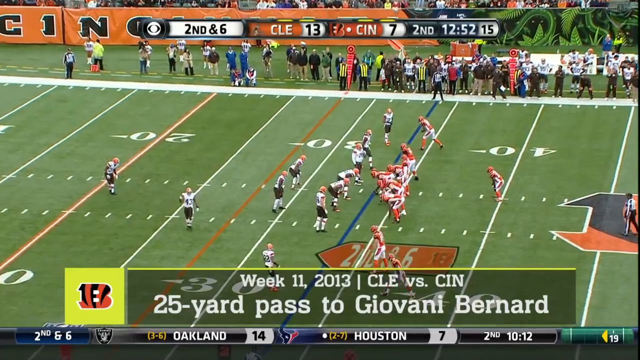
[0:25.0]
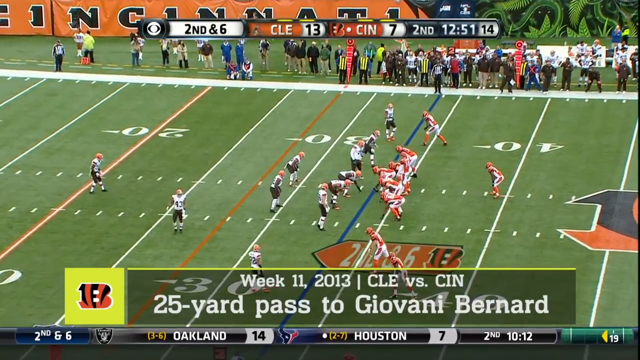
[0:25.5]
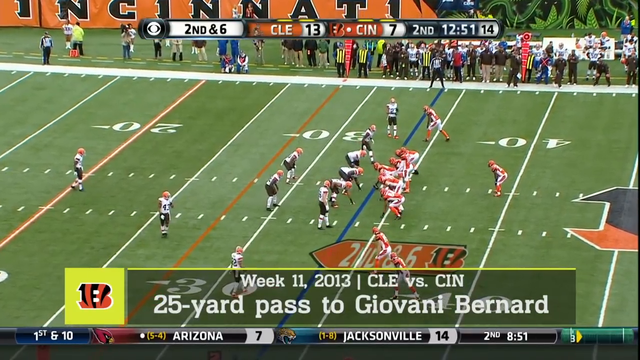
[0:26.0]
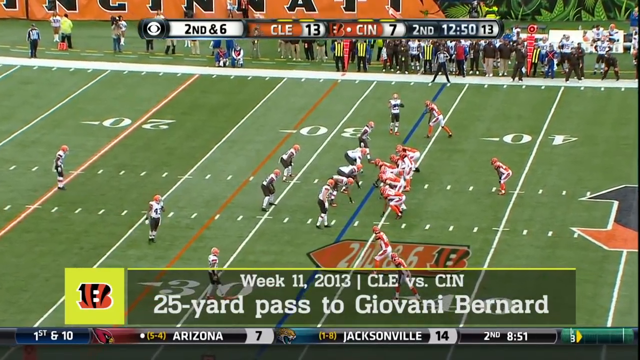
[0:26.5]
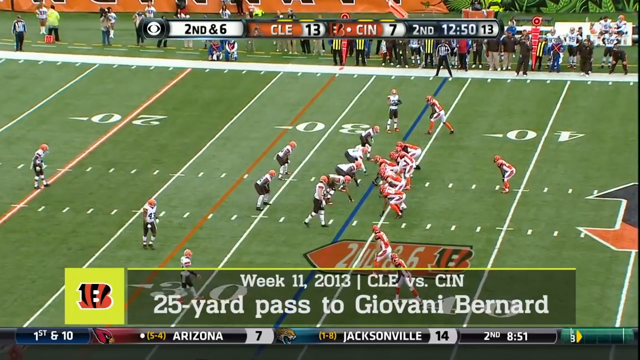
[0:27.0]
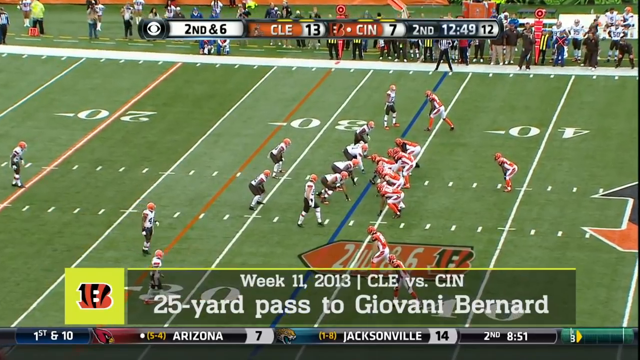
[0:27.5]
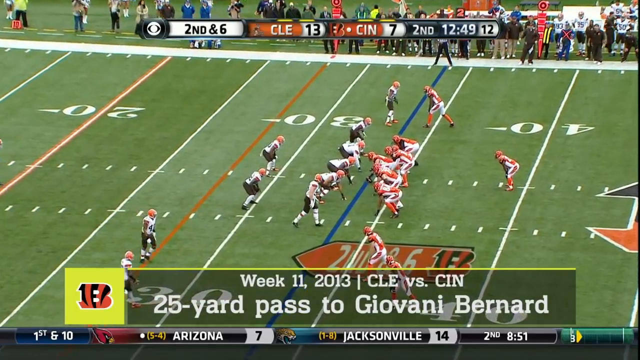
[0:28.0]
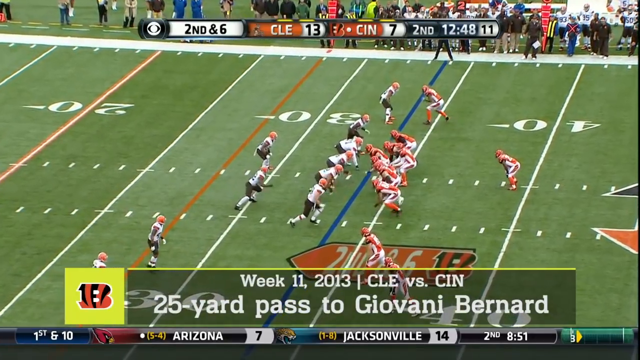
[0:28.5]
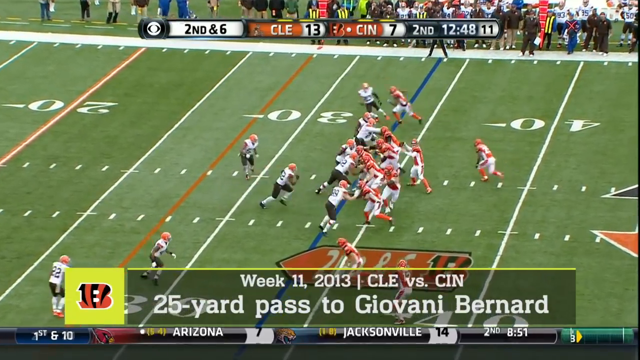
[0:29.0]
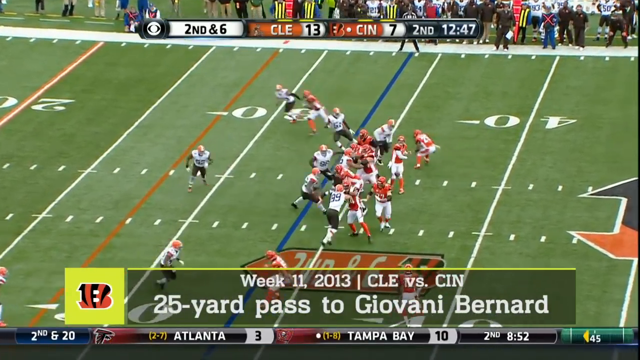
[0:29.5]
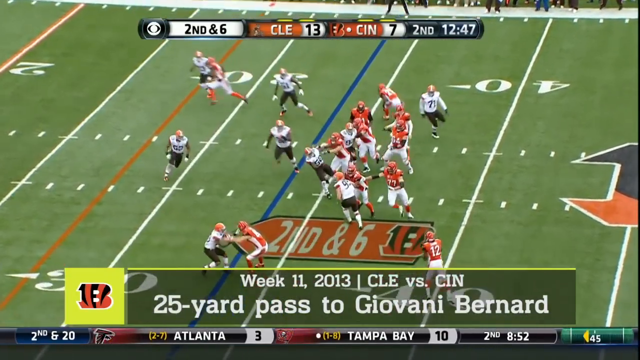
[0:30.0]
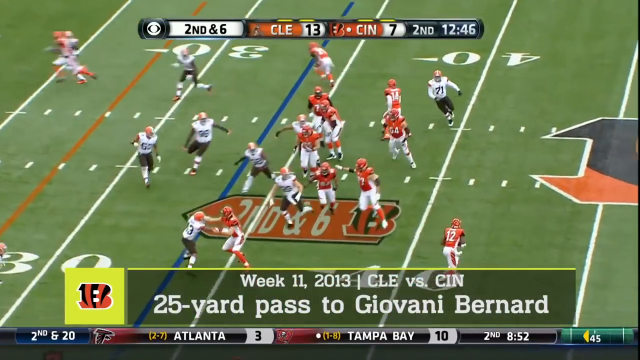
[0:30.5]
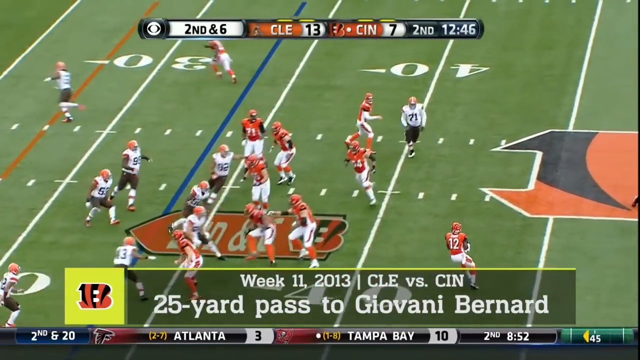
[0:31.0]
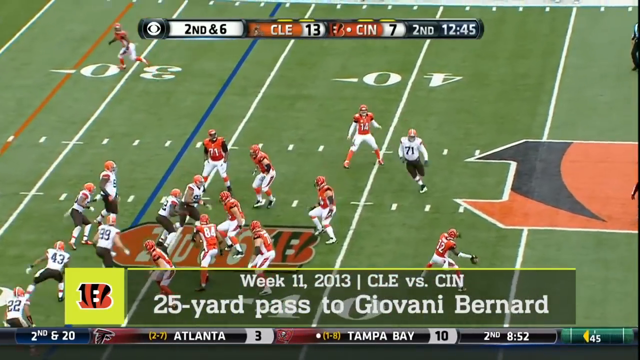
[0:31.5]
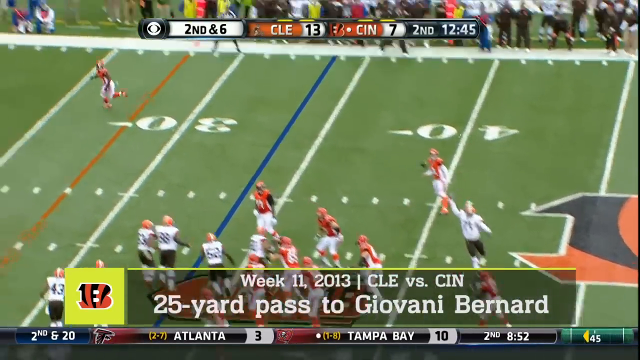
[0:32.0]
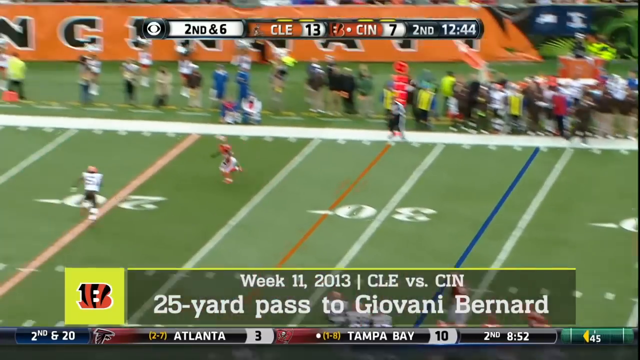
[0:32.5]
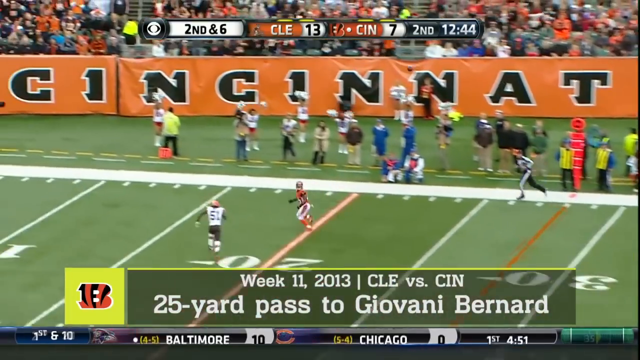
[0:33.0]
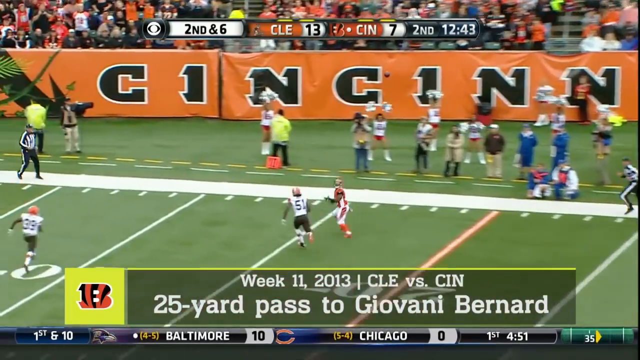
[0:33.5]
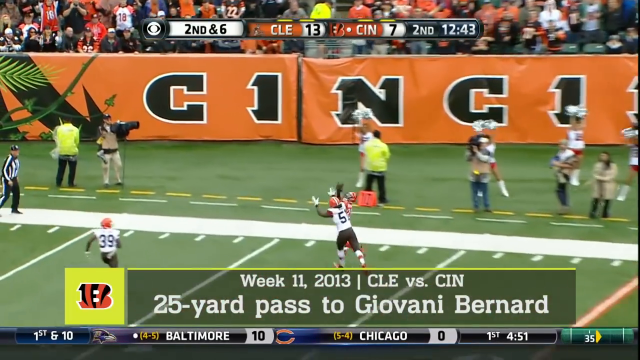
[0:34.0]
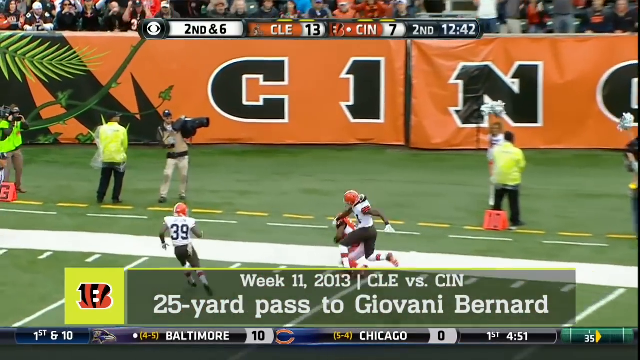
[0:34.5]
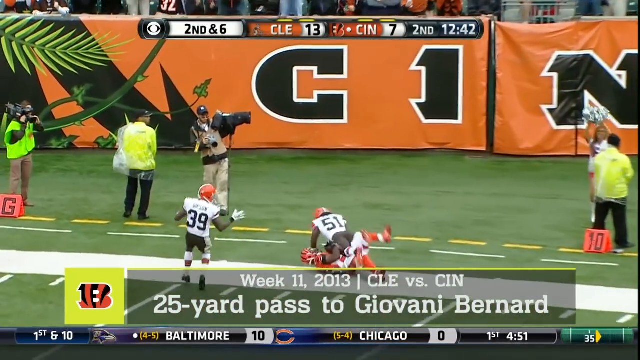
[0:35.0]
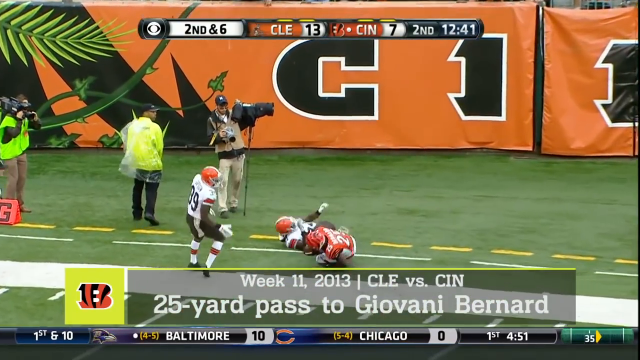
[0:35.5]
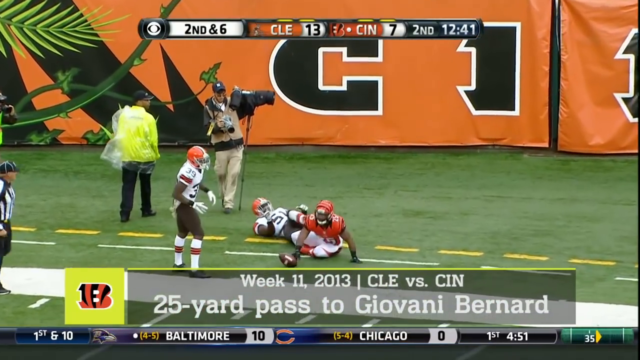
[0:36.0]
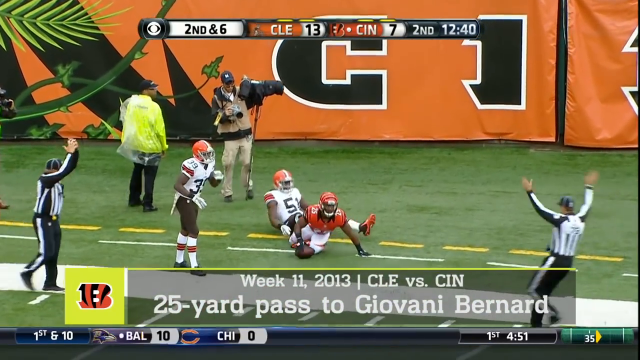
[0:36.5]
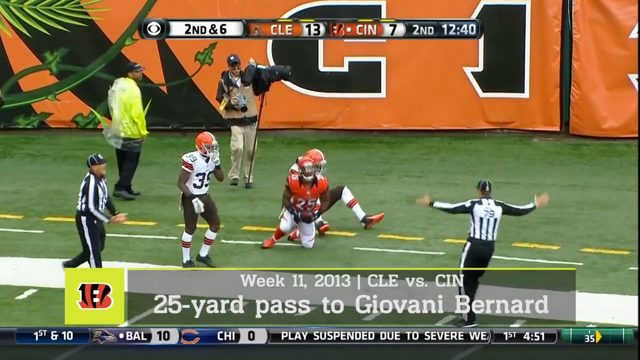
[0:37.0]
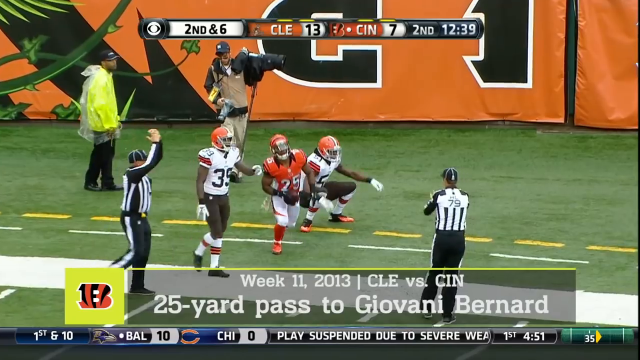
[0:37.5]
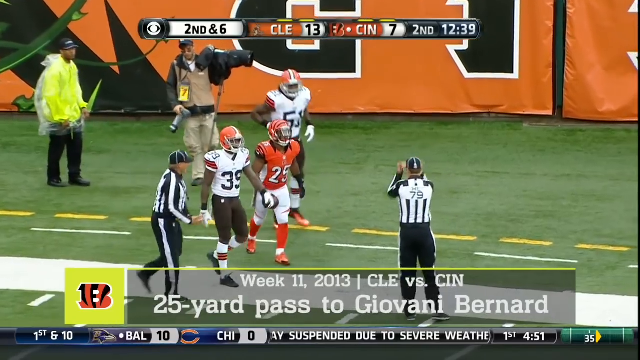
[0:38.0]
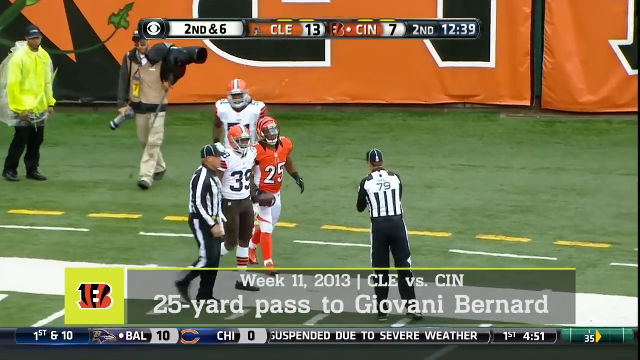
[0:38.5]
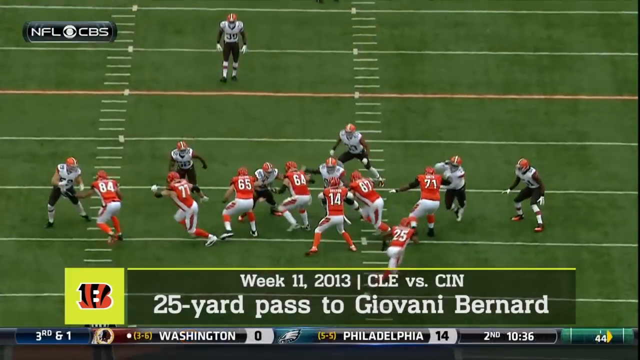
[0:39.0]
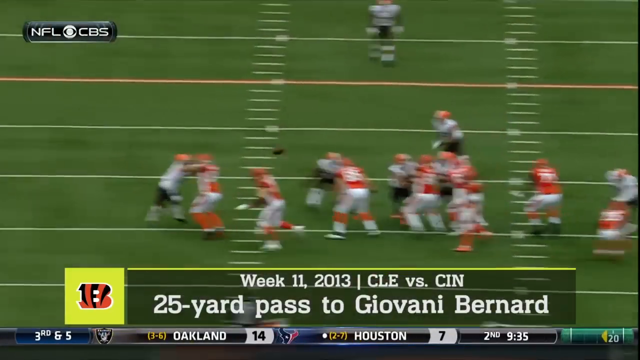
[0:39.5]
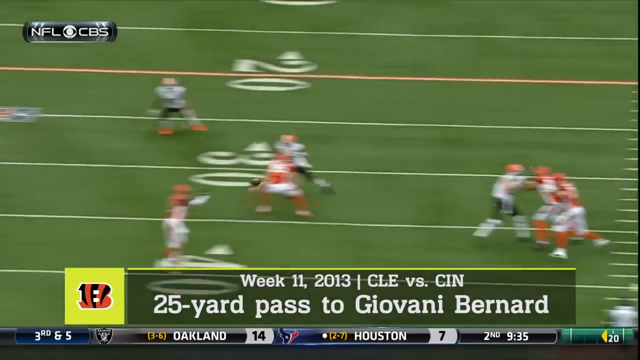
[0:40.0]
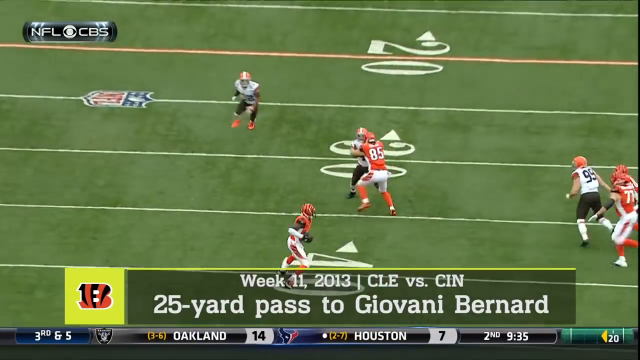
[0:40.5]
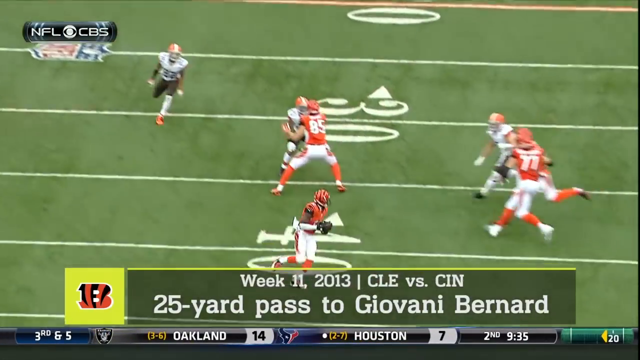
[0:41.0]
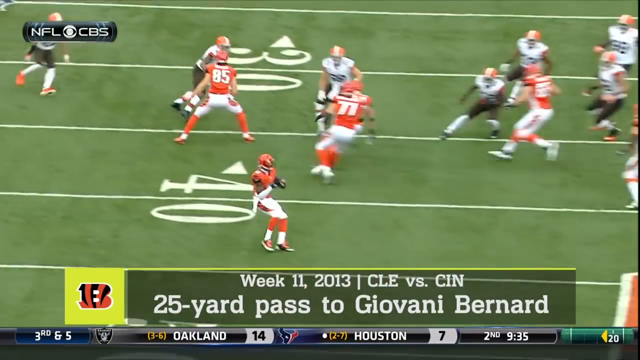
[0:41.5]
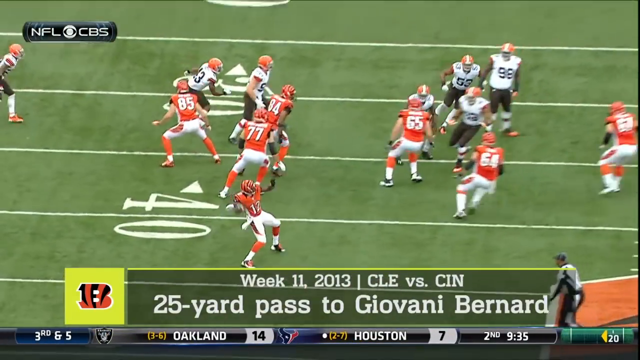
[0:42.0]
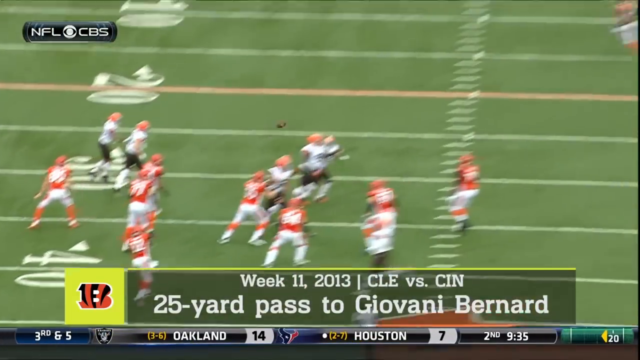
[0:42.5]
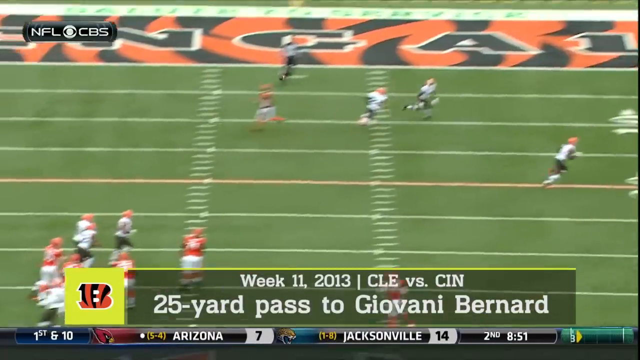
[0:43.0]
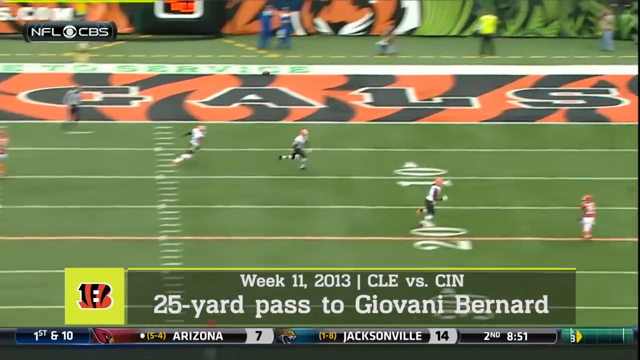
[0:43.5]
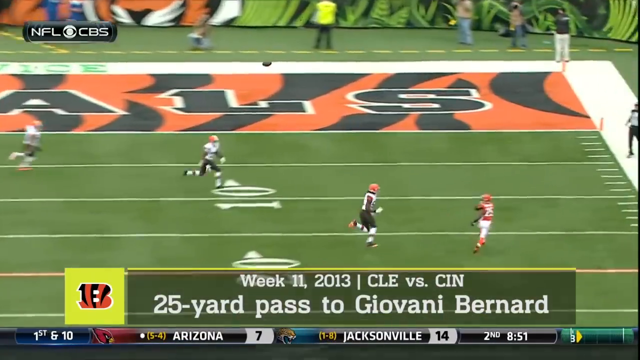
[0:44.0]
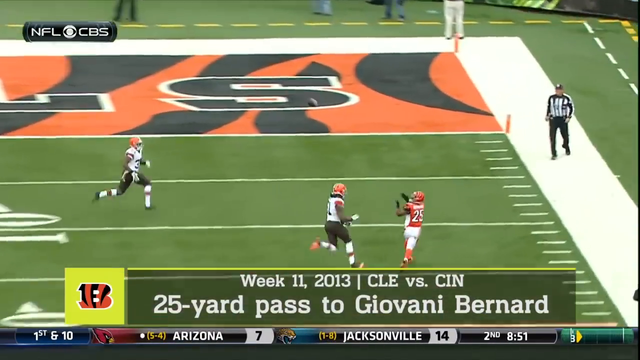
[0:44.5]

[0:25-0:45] A different play starts as both teams get into position. A pass is thrown, and the player in the orange jersey seems to catch the ball, though possibly out of bounds, and he tumbles to the ground along with a player in a white jersey. One of them gets up, and a replay from a different angle shows the ball being caught just before the player runs out of bounds.